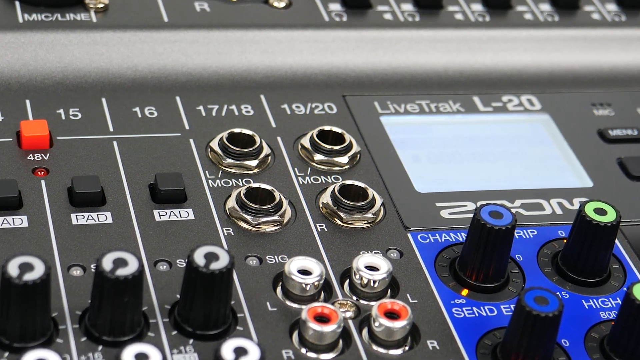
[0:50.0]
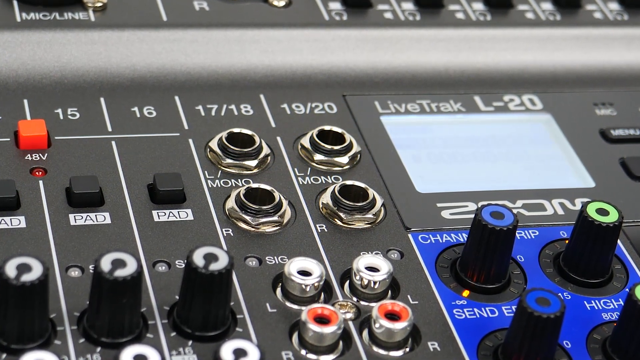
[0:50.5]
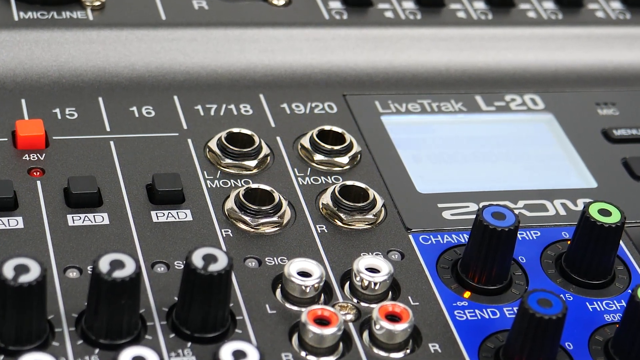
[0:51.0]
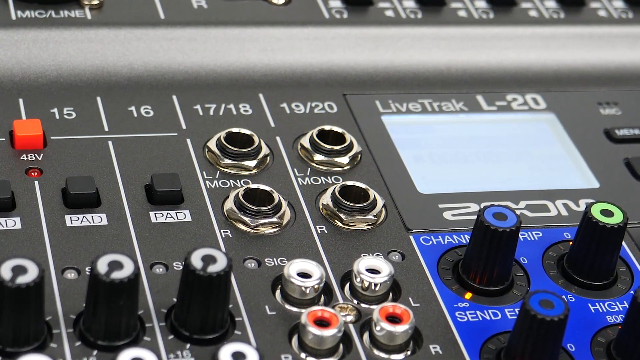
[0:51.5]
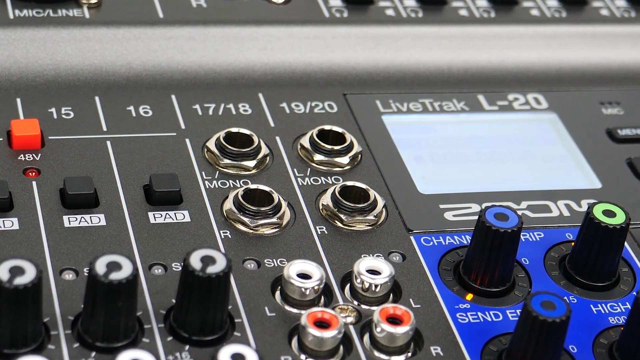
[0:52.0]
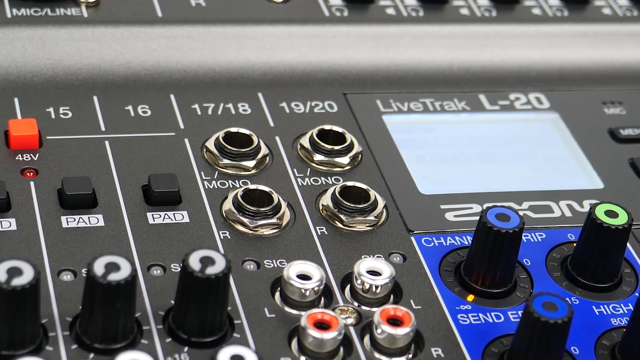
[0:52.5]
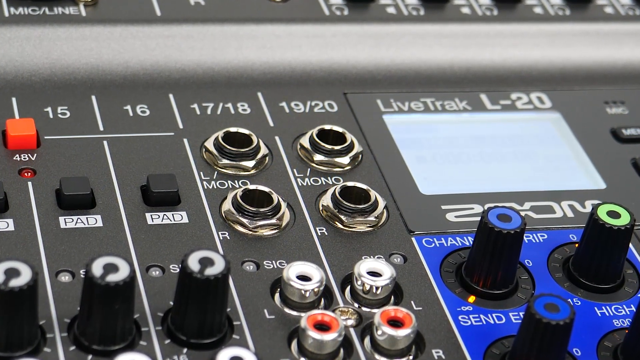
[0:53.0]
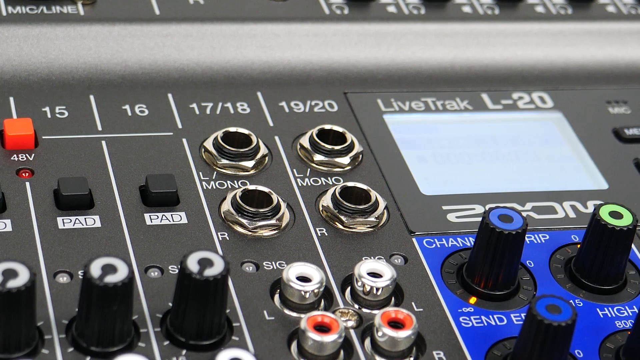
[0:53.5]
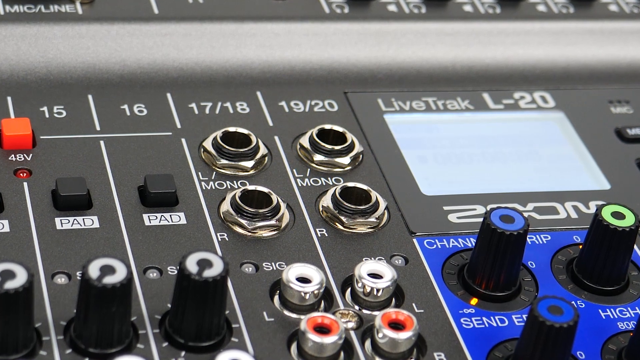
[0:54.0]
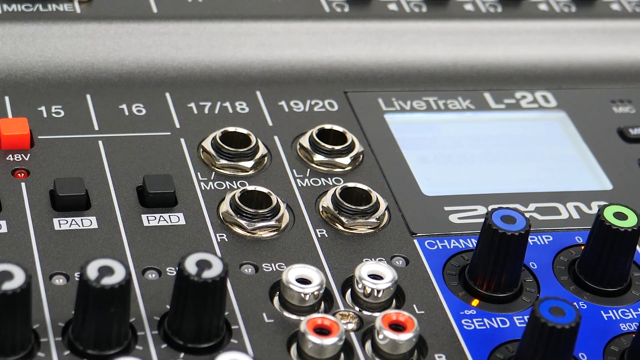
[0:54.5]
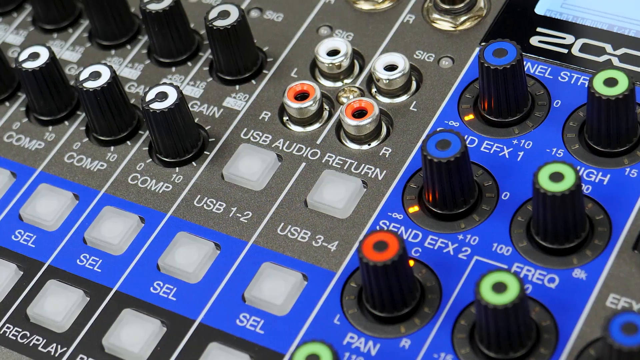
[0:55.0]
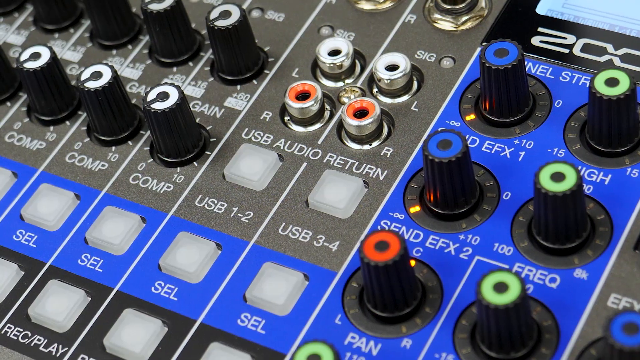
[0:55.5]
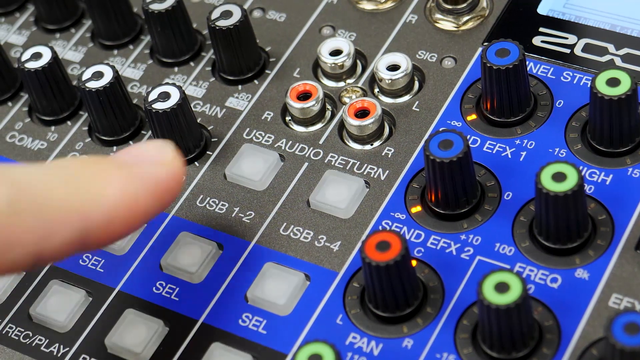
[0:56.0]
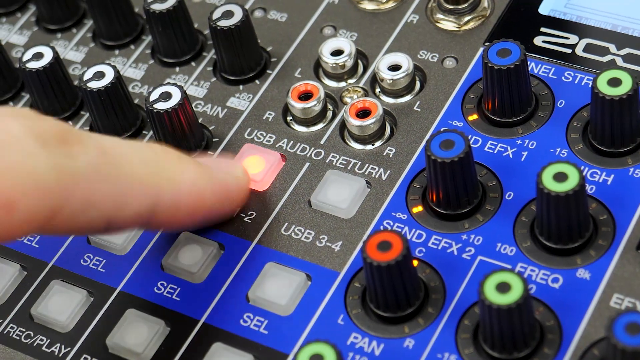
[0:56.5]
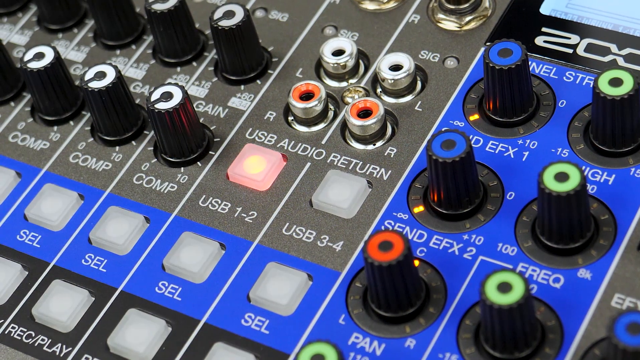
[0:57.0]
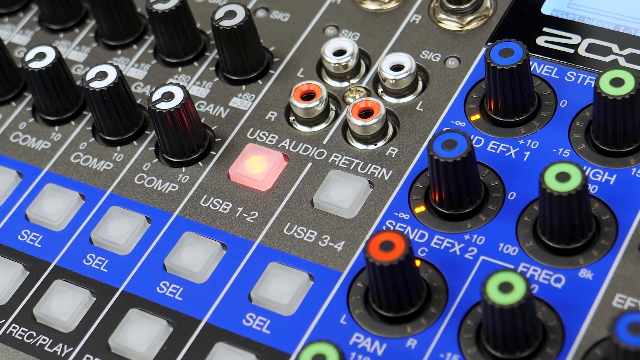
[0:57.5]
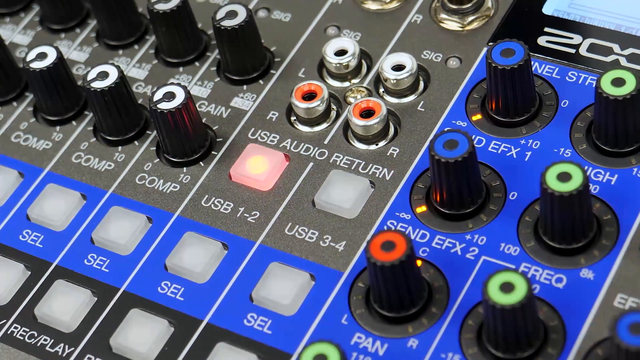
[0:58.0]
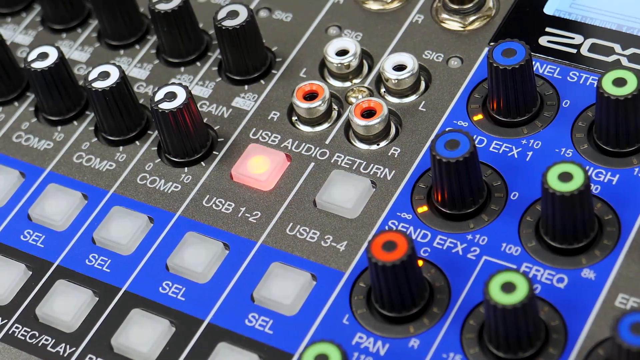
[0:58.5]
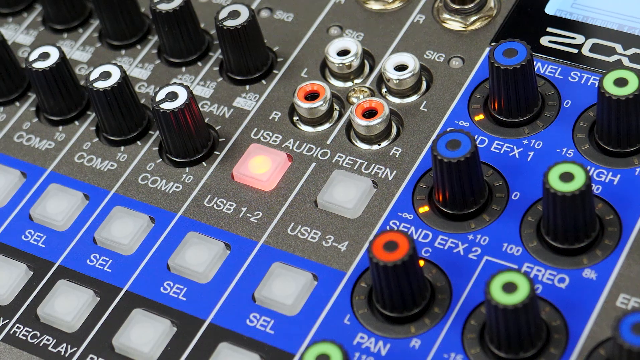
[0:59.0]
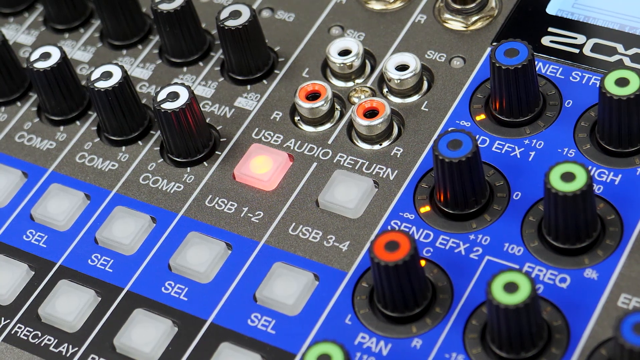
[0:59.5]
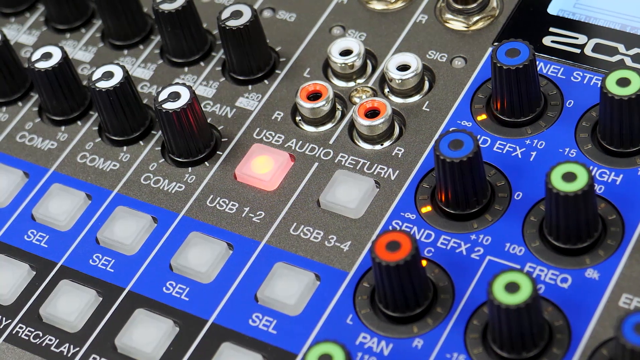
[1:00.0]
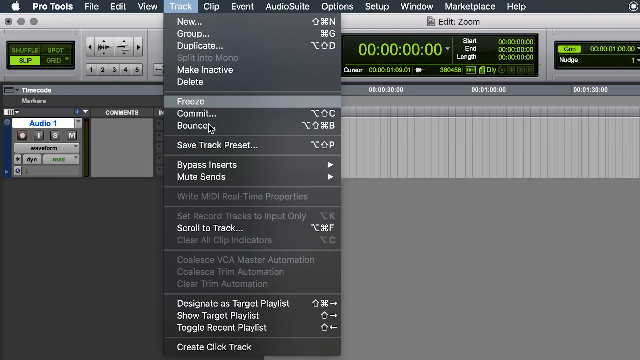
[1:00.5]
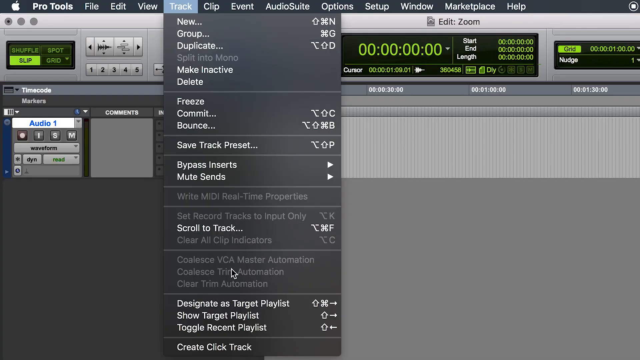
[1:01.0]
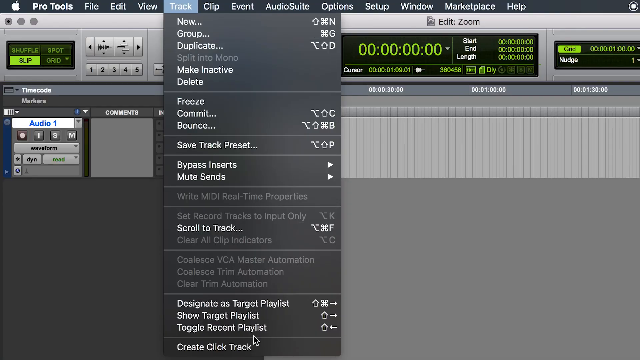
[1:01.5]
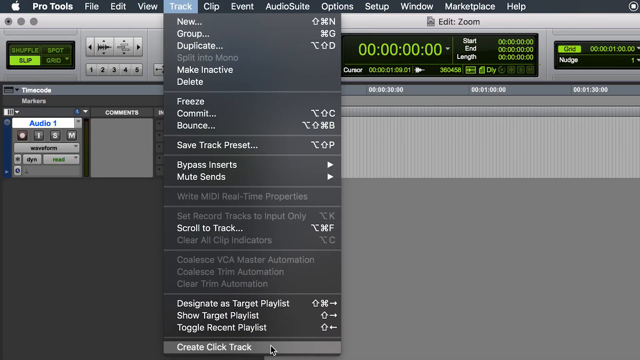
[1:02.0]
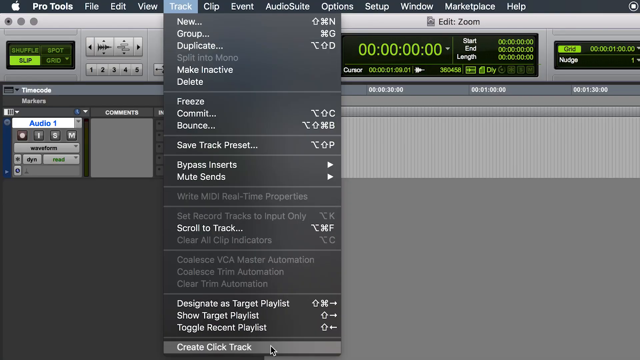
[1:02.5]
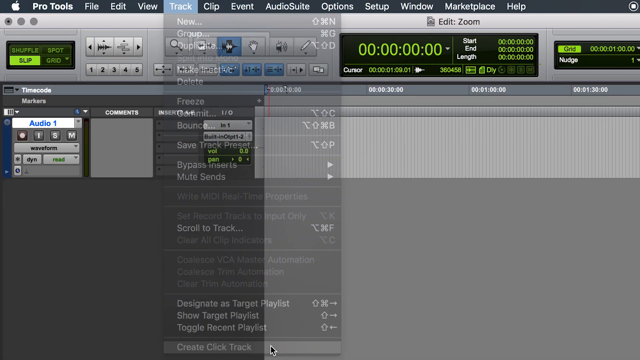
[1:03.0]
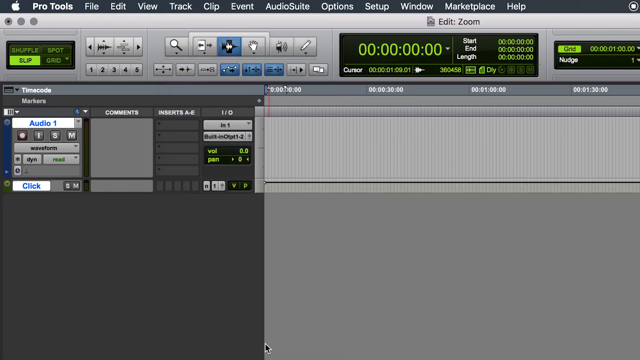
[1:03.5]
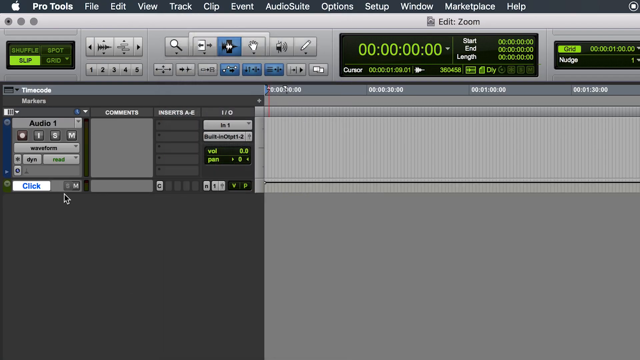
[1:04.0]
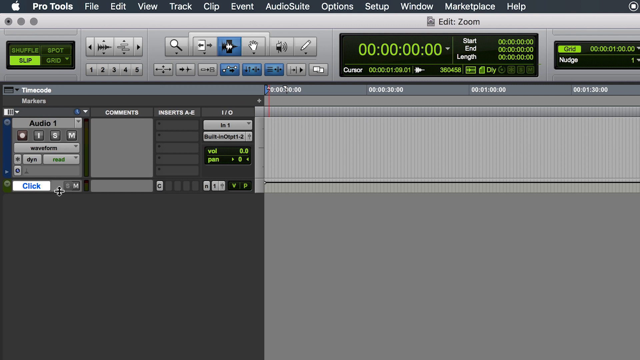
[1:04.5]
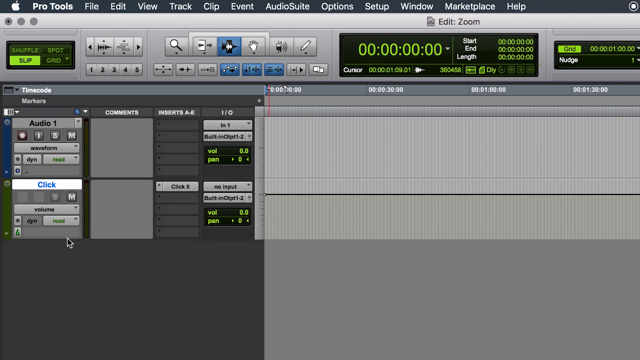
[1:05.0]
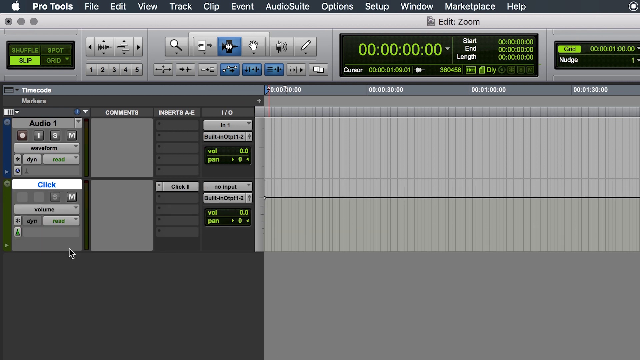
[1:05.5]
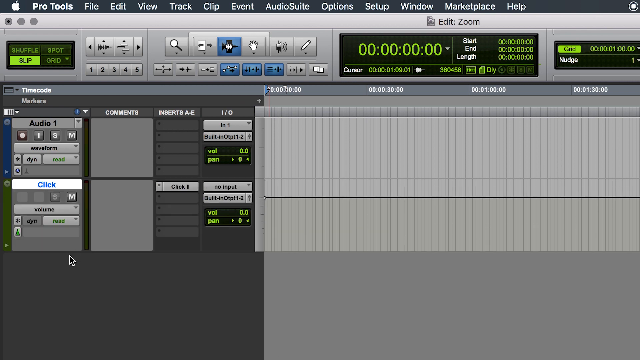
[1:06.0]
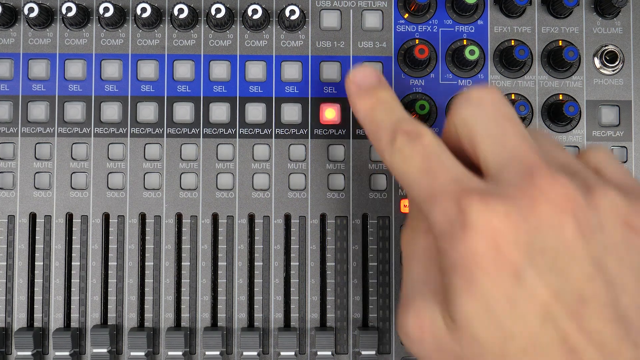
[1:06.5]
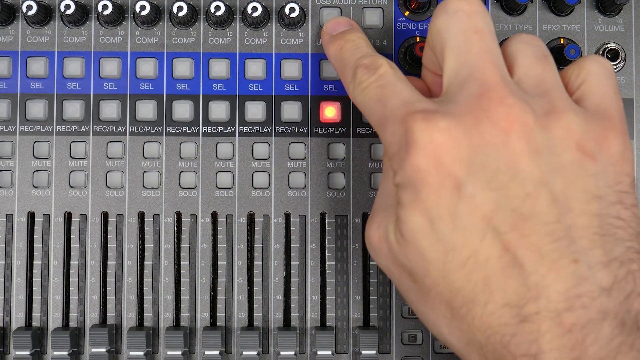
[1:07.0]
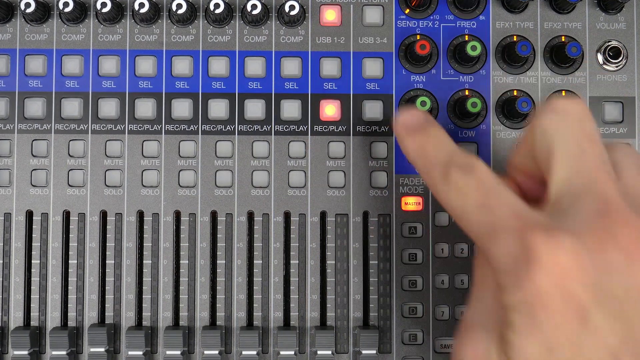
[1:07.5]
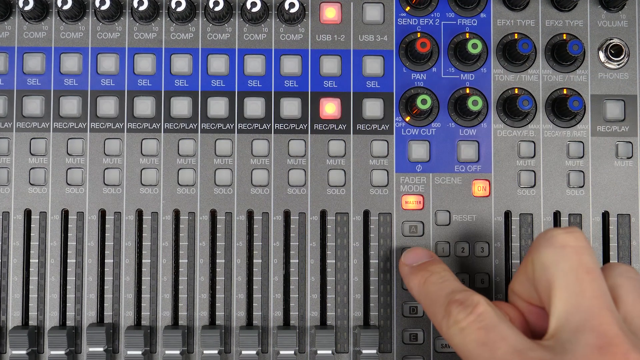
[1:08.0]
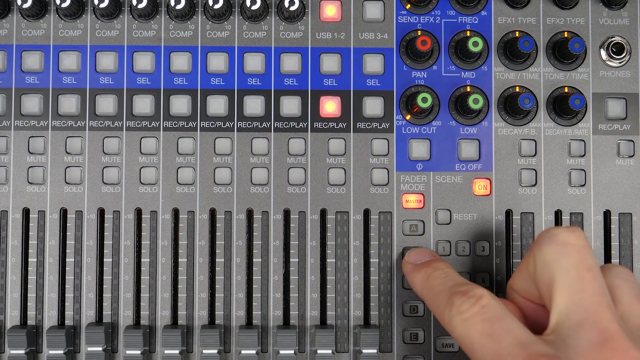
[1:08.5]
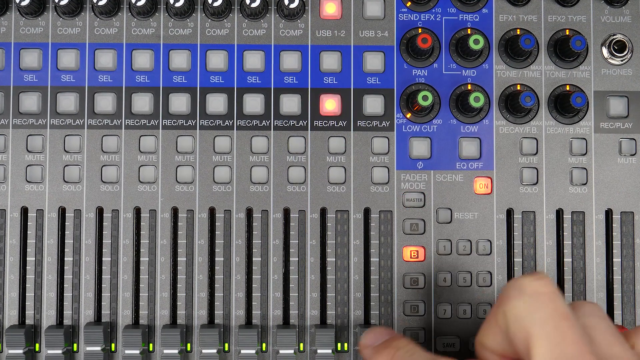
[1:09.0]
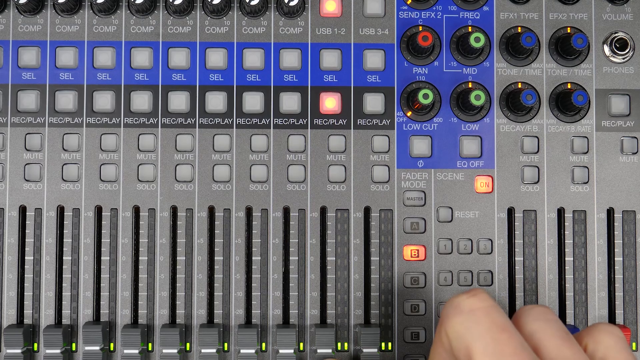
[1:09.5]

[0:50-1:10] The camera zooms in on the board, showing "USB audio return". USB 1.2 is clicked and the button turns red. Create task is clicked and drops down, and it is then expanded further; create click track is also clicked. Buttons are pressed, including a white button that turns red when pressed, which is pressed several times. A switch is pushed up, the silver buttons are shown, and the volume is turned up on something.